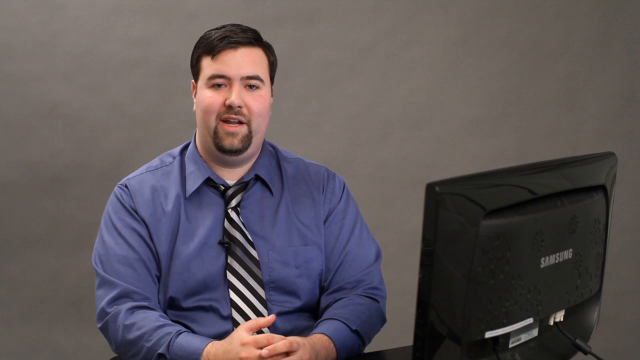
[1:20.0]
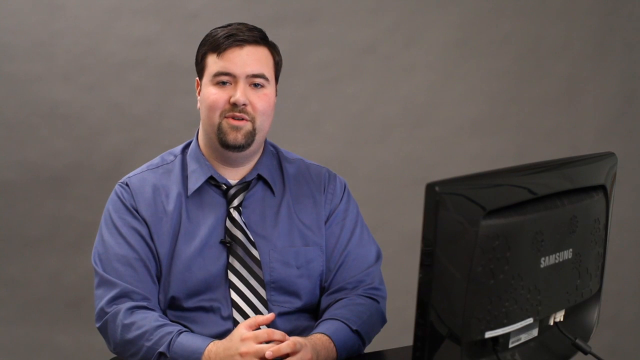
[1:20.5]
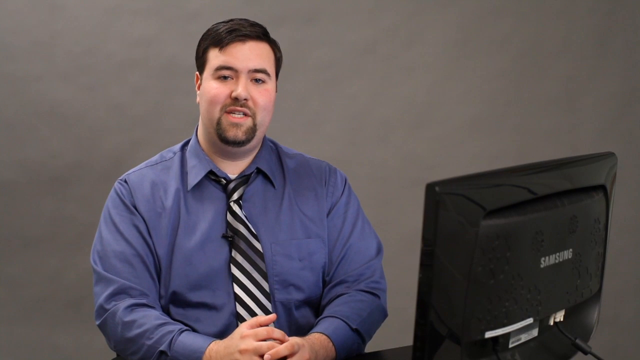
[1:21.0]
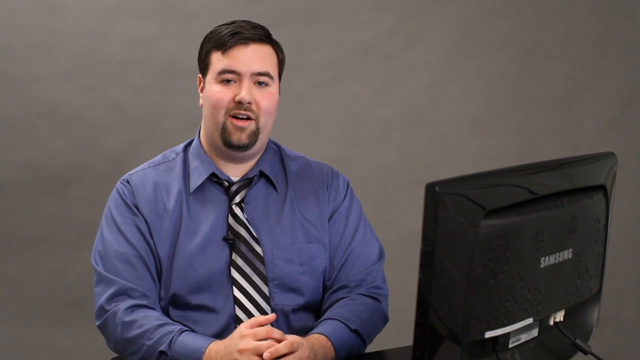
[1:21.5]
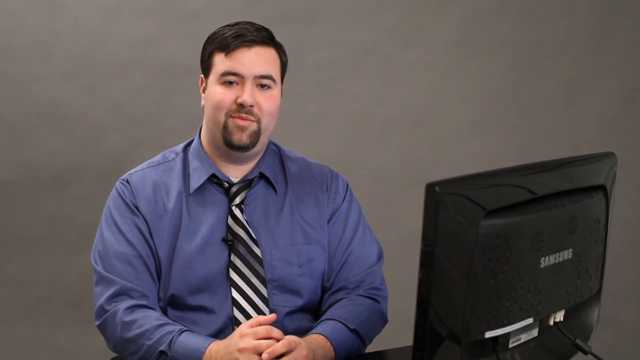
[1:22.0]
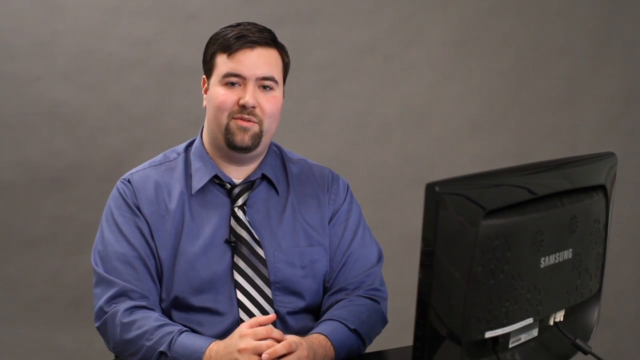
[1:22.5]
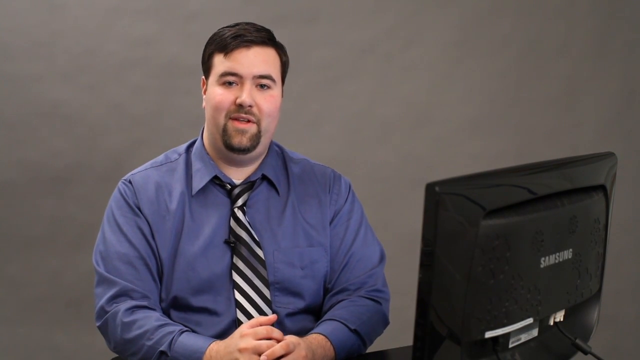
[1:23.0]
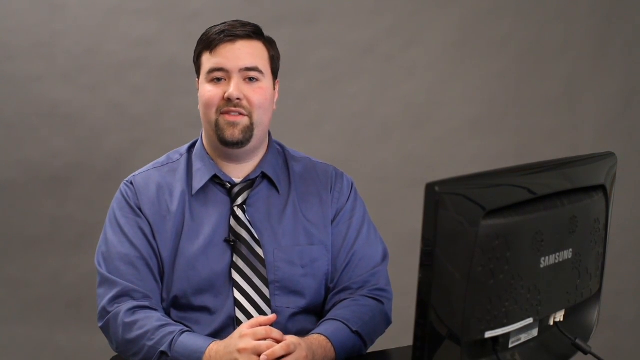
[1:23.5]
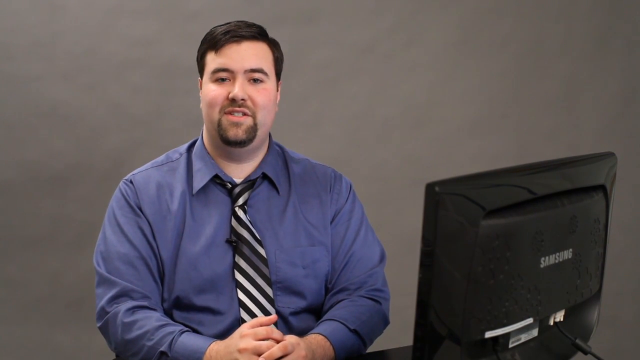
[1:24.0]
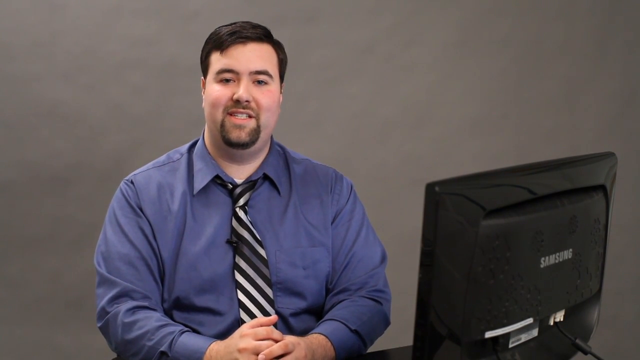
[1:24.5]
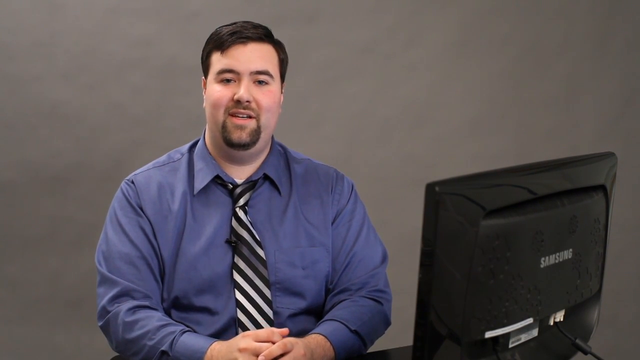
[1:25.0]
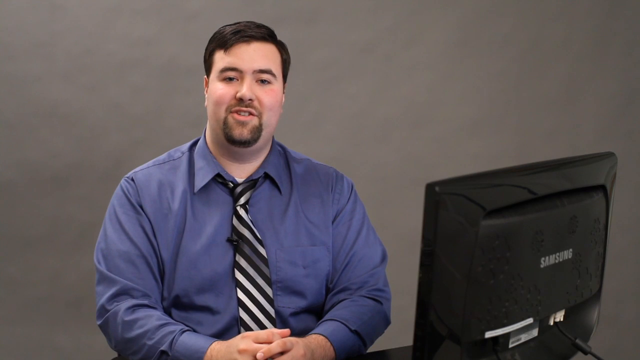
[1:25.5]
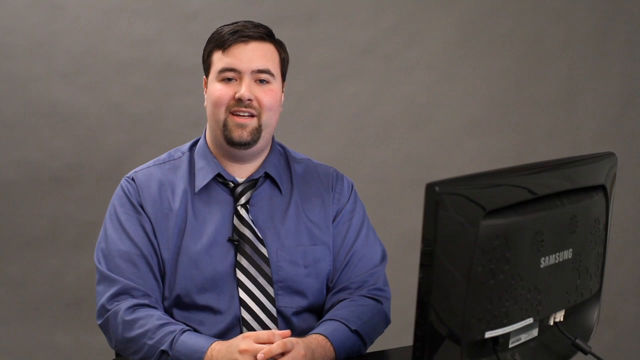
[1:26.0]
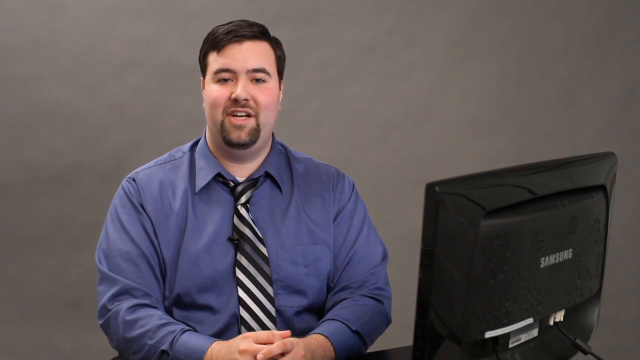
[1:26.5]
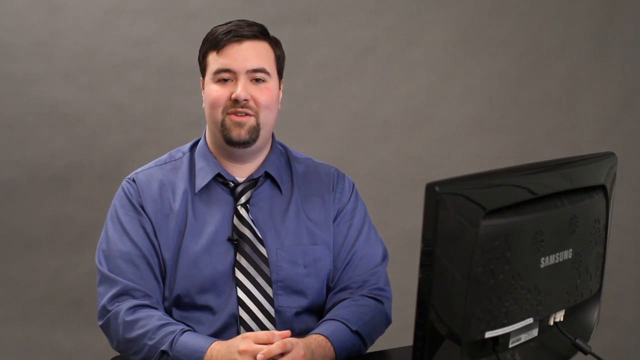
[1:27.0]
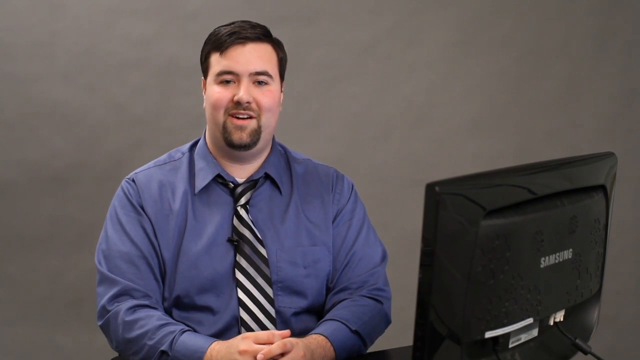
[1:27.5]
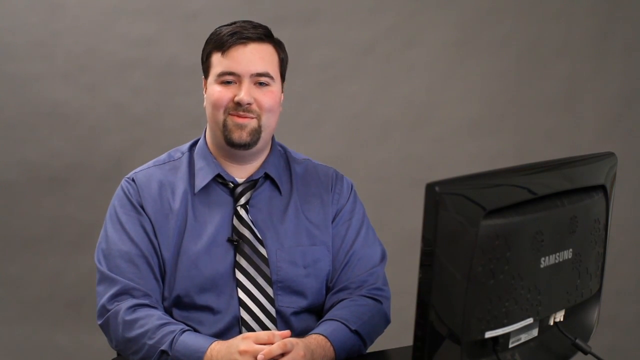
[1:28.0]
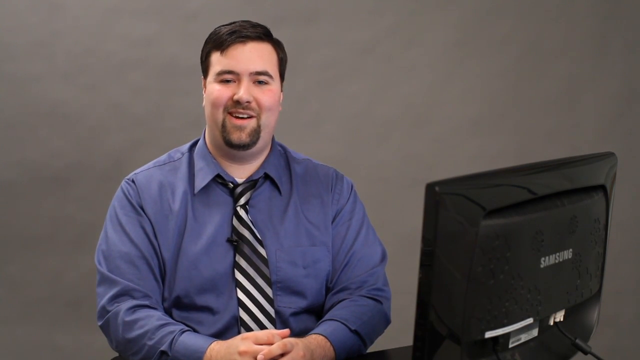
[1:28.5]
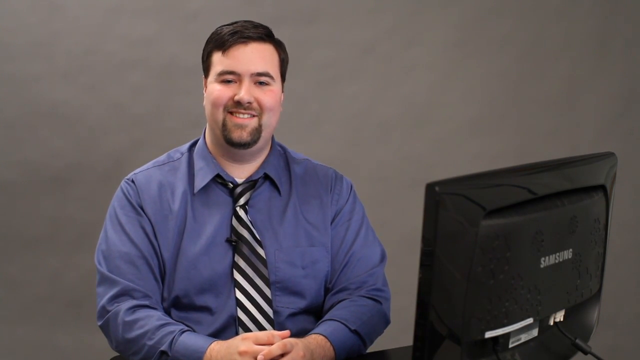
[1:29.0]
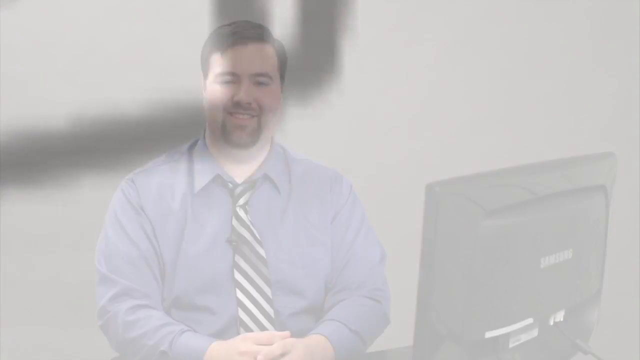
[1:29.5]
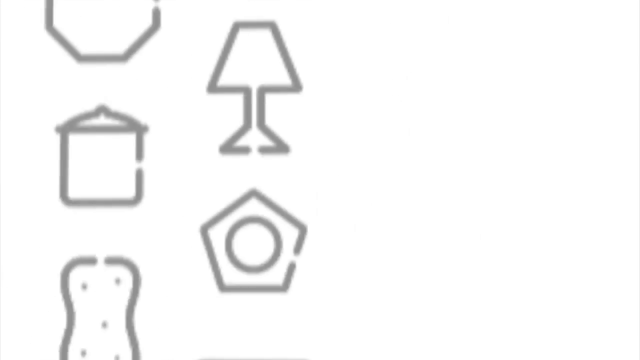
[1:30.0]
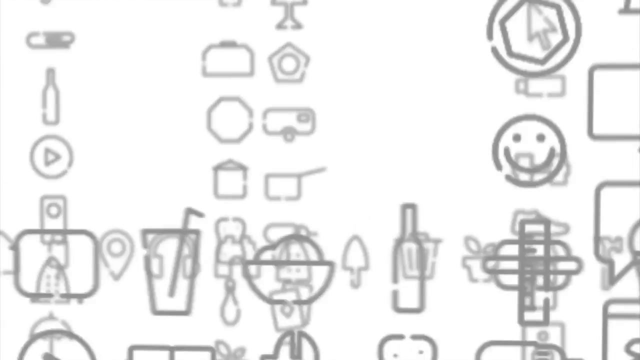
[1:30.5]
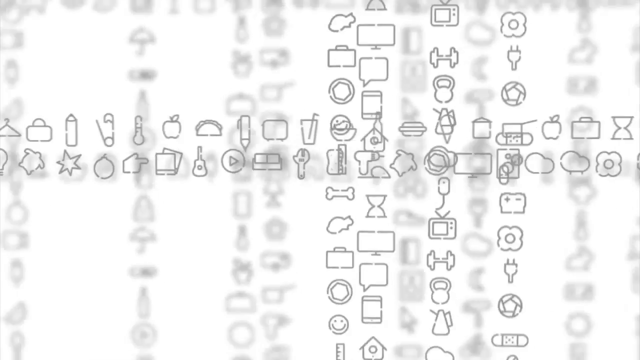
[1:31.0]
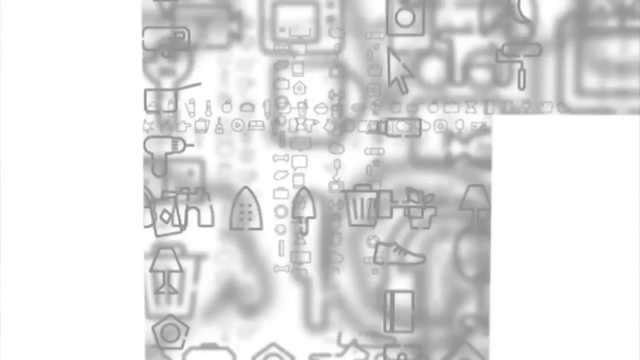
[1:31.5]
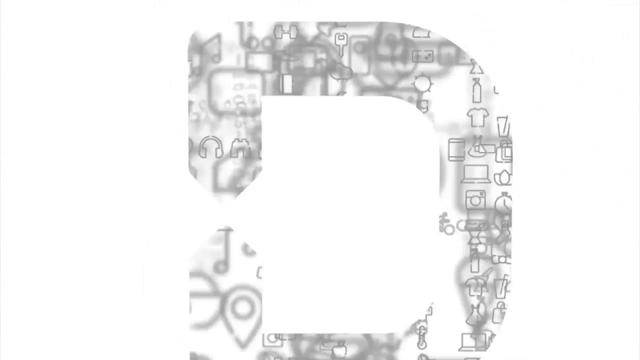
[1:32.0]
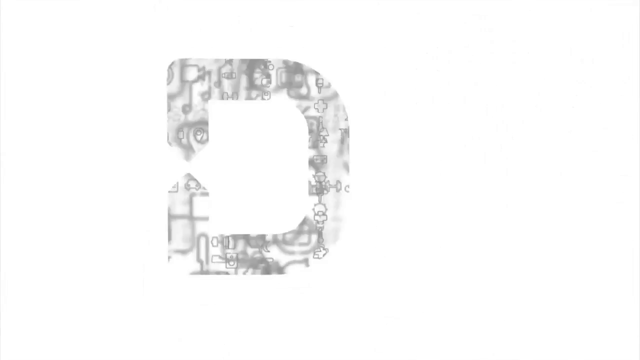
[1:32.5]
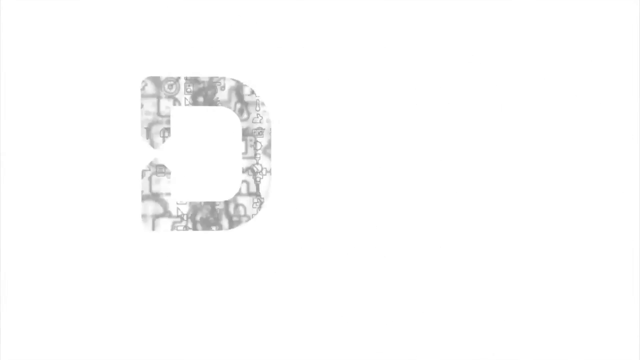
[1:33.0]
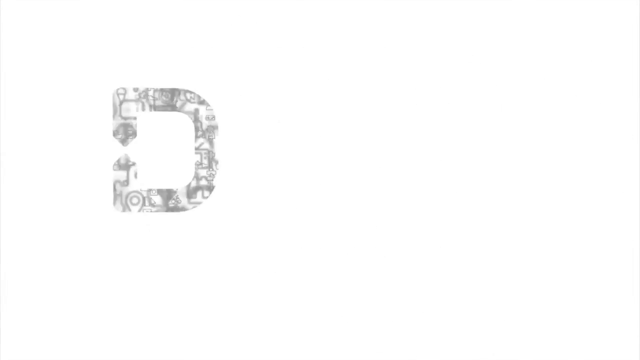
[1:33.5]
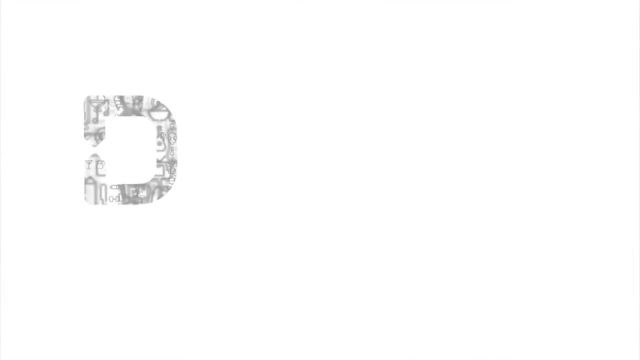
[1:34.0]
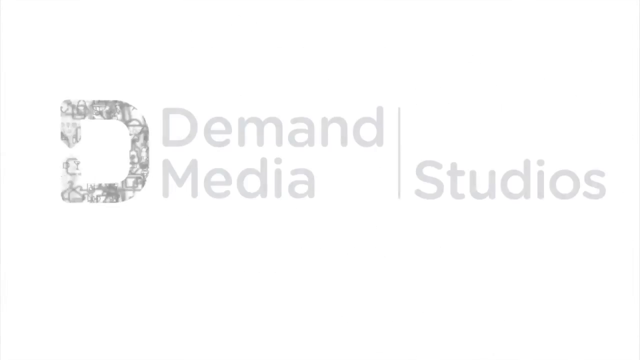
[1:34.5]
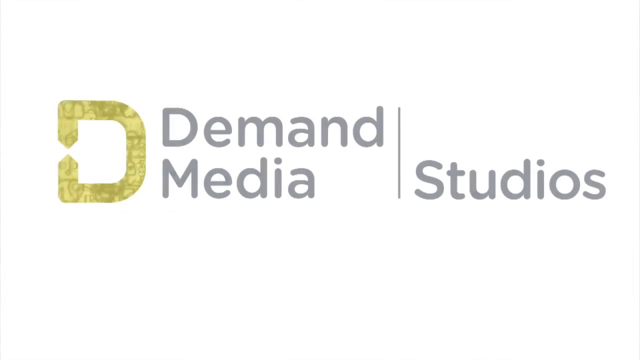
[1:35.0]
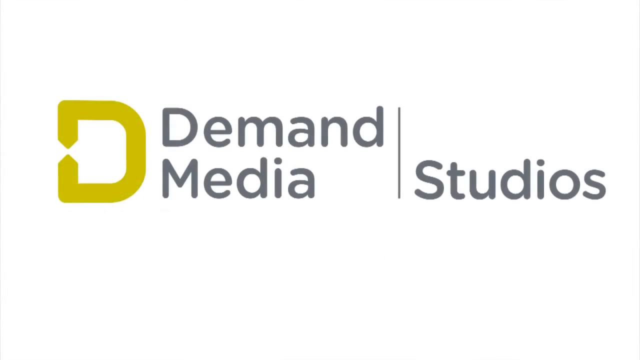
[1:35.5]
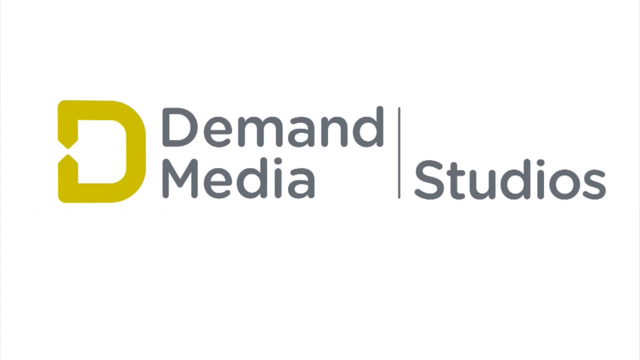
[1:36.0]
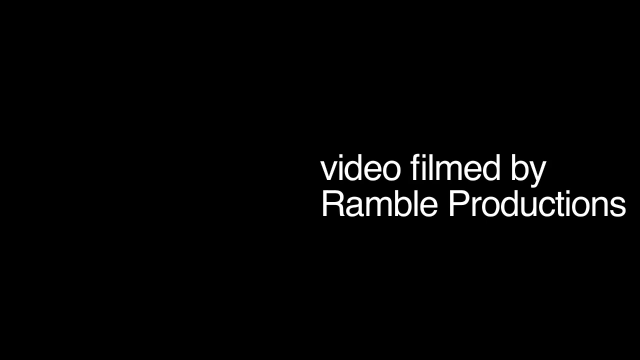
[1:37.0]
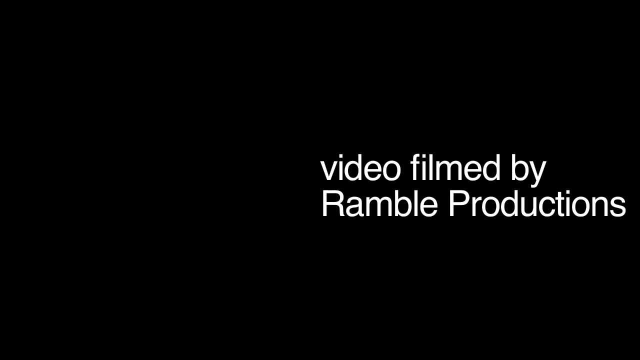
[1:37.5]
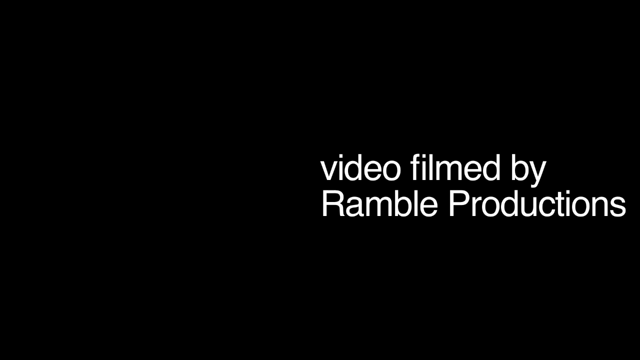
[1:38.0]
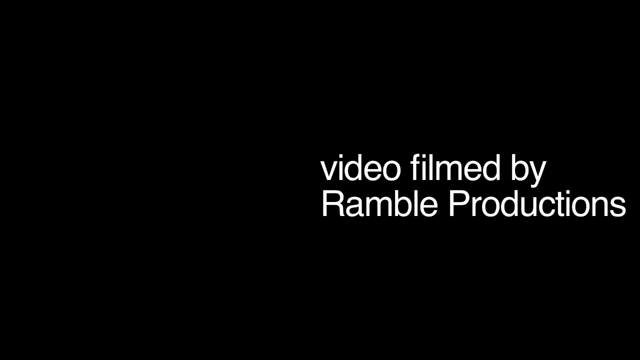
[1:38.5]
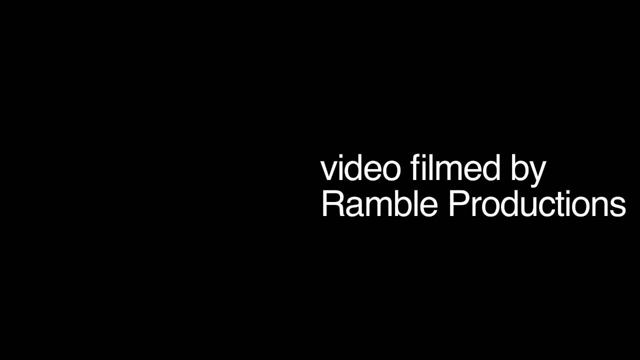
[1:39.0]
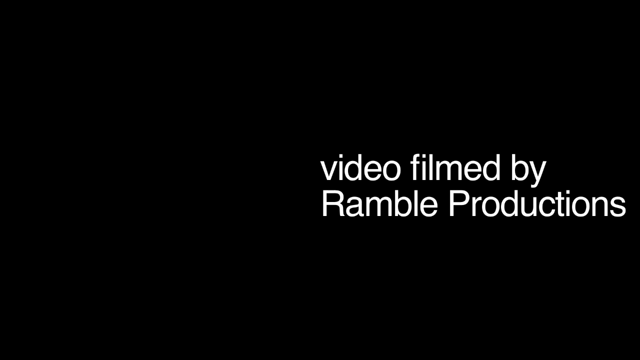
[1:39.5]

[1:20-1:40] The scene returns to Josiah Rea in the room with a gray wall in the background, sitting next to a Samsung computer monitor. As he is interviewed, he makes subtle movements and smiles. He has short dark hair, light skin, and a mustache and beard combo circling around his lips, and wears a blue dress shirt and a black and white striped tie with a small microphone clipped onto it. Next an illustration appears with multiple objects such as a stop sign, a power drill, a trash can, a lamp, a dog bone, and SMS text message icons, colored dark gray on a white background. The animation transitions to a capitalized letter D, colored yellow, and a logo pops up that says "Demand Media Studios."